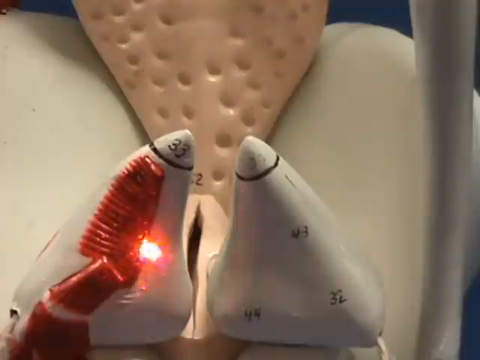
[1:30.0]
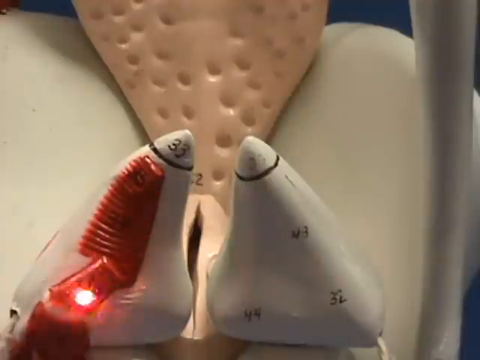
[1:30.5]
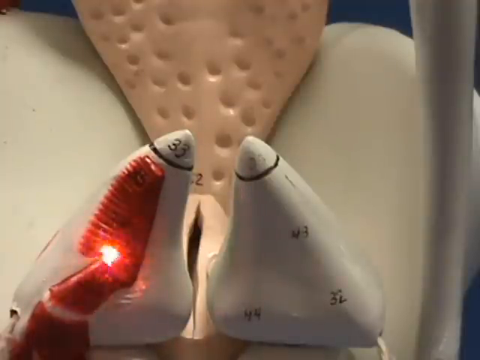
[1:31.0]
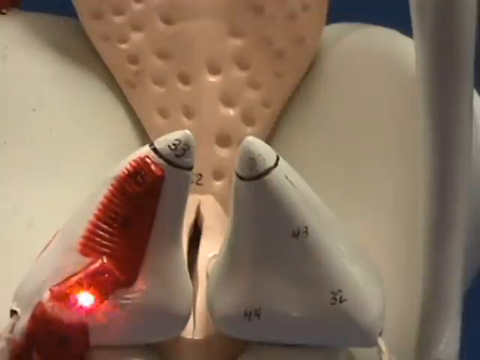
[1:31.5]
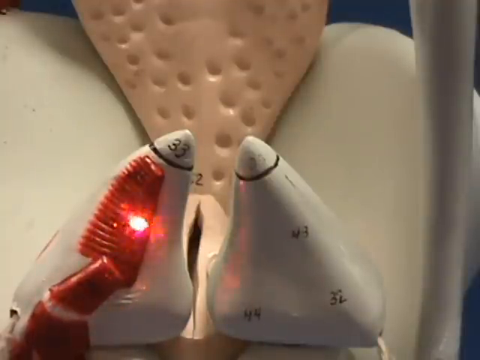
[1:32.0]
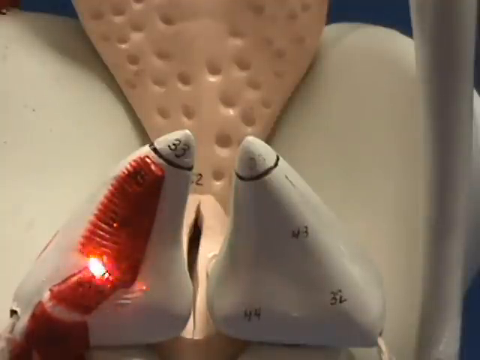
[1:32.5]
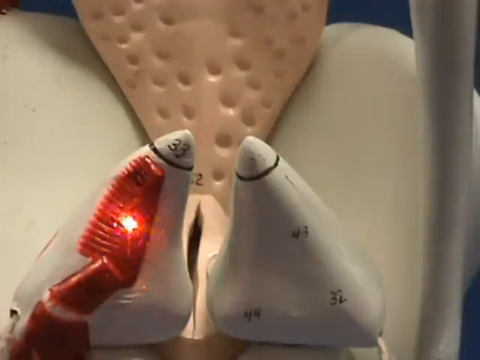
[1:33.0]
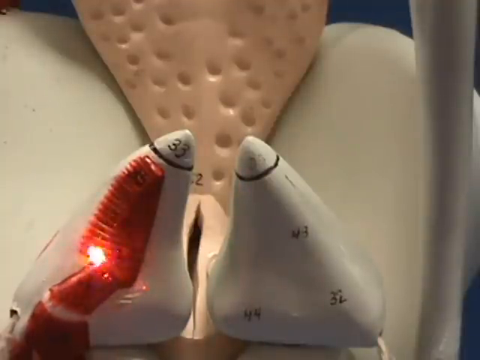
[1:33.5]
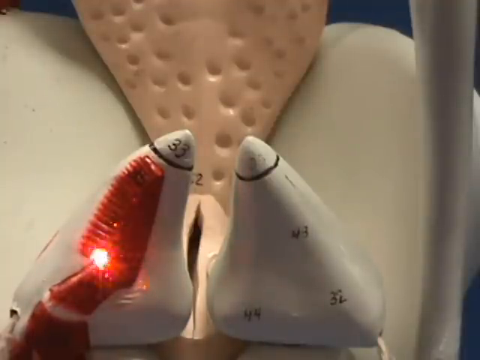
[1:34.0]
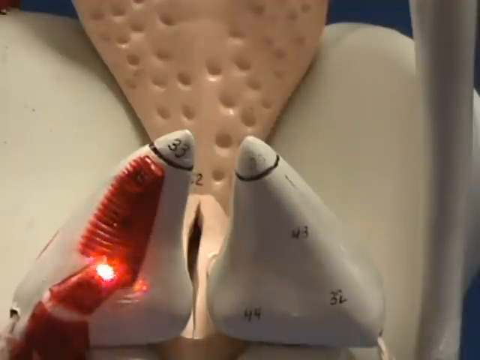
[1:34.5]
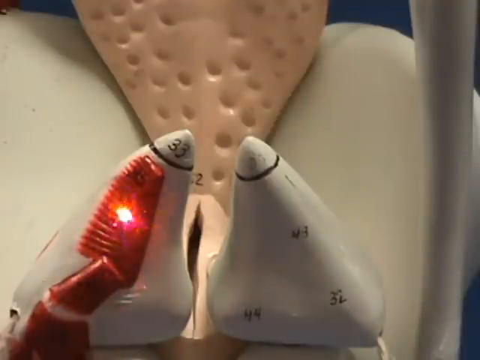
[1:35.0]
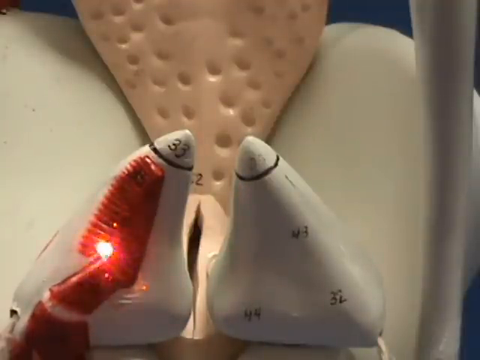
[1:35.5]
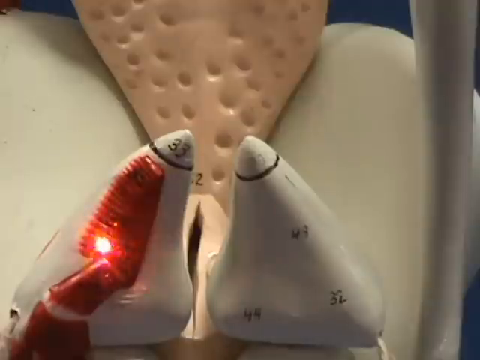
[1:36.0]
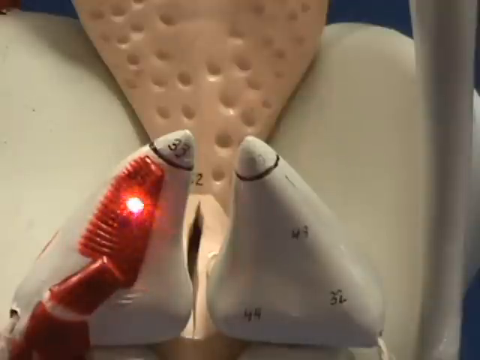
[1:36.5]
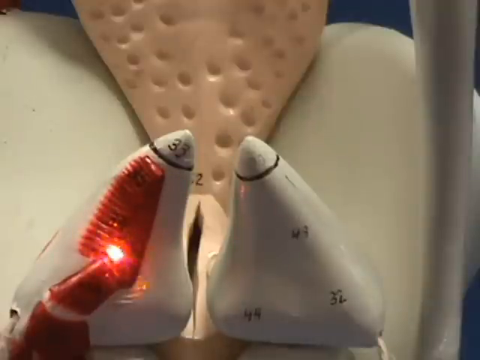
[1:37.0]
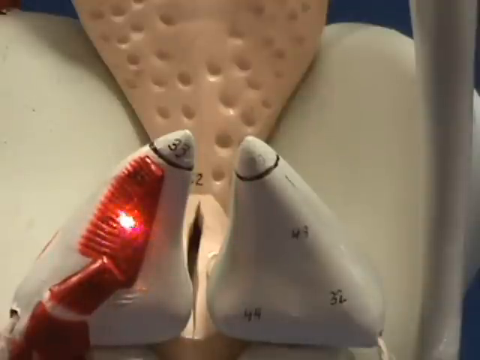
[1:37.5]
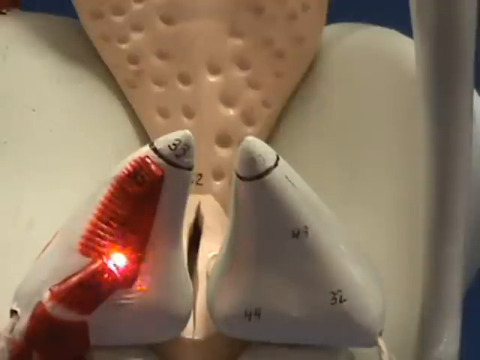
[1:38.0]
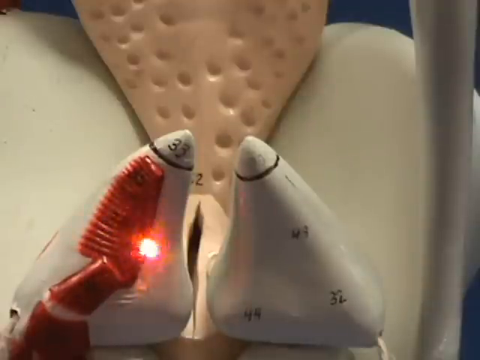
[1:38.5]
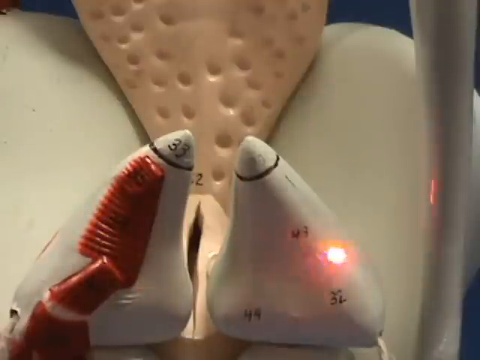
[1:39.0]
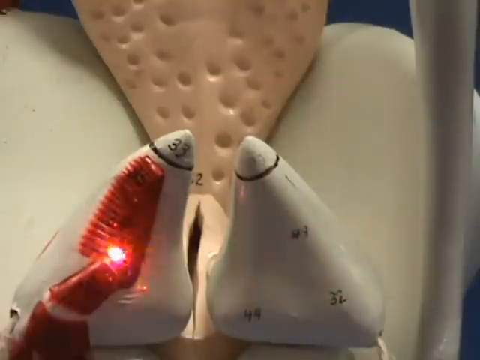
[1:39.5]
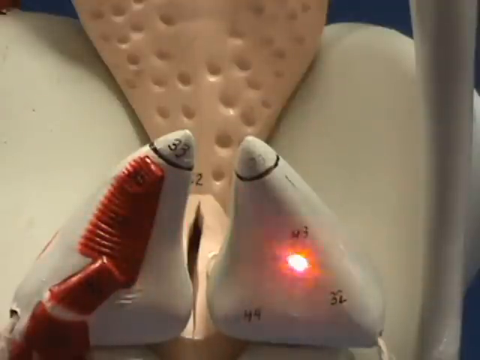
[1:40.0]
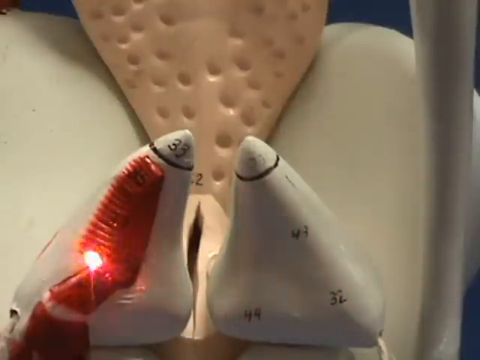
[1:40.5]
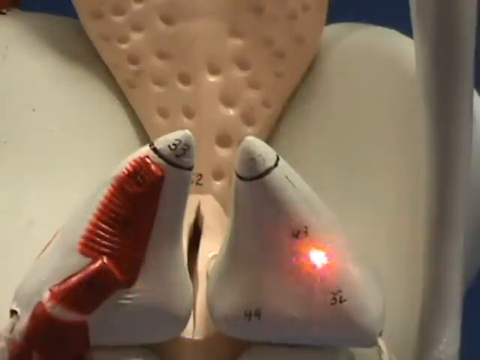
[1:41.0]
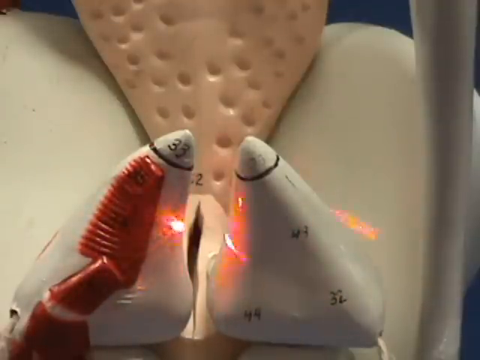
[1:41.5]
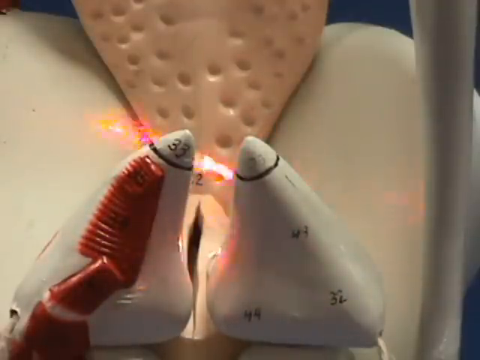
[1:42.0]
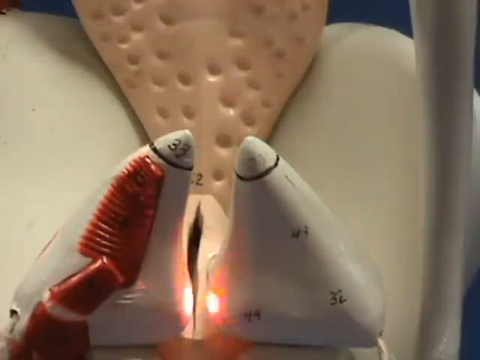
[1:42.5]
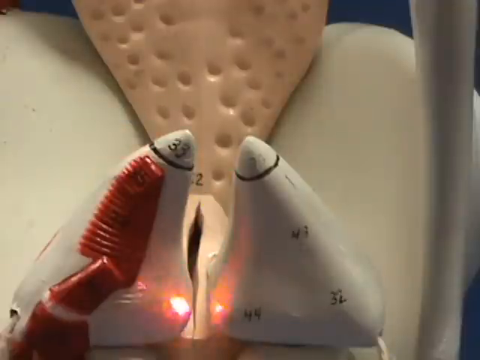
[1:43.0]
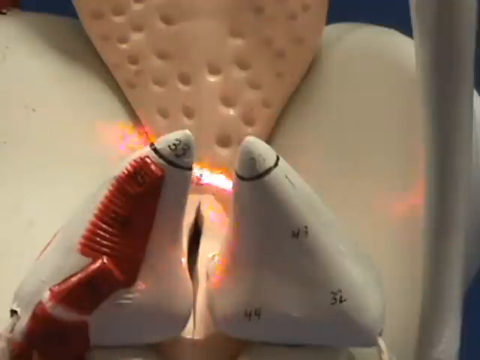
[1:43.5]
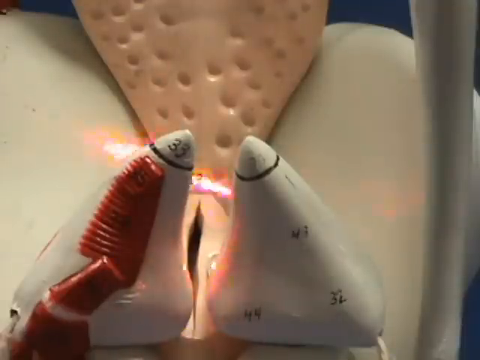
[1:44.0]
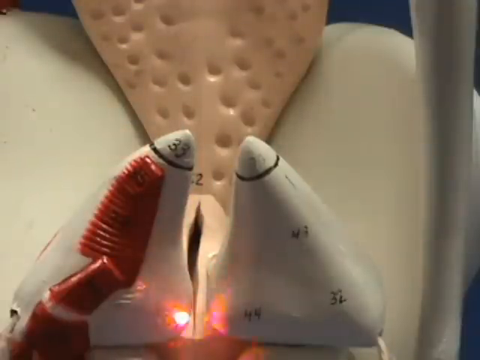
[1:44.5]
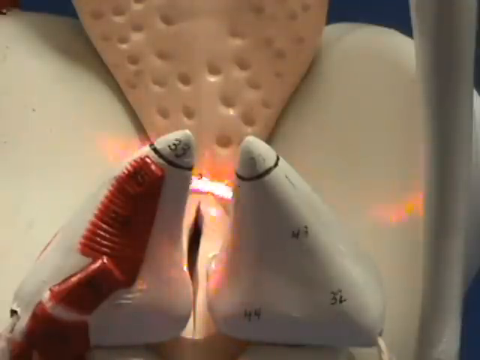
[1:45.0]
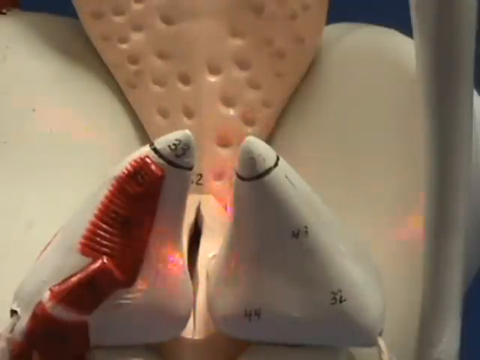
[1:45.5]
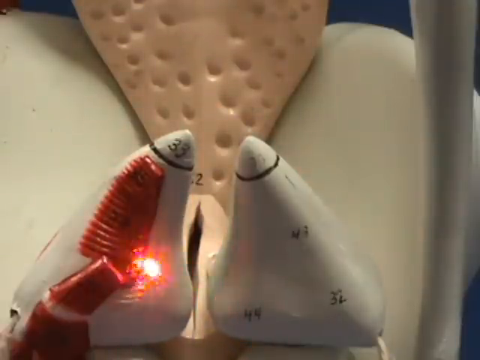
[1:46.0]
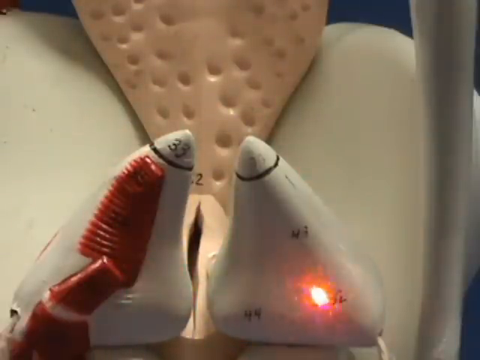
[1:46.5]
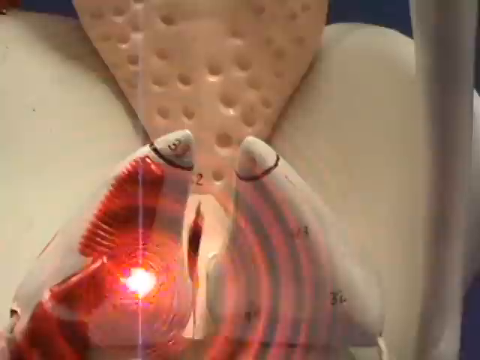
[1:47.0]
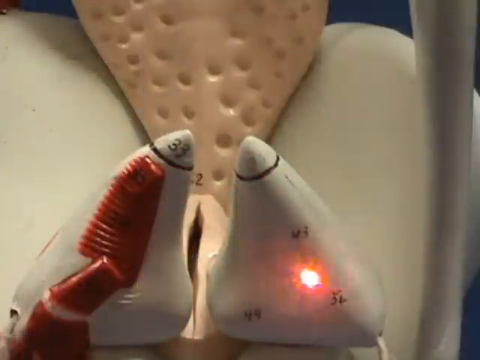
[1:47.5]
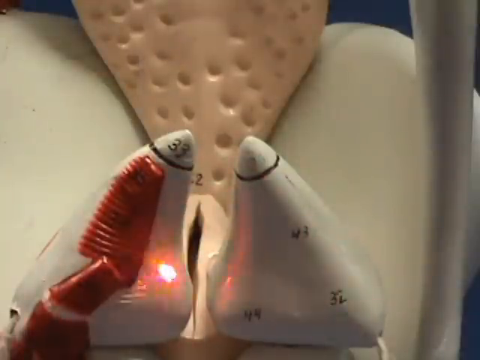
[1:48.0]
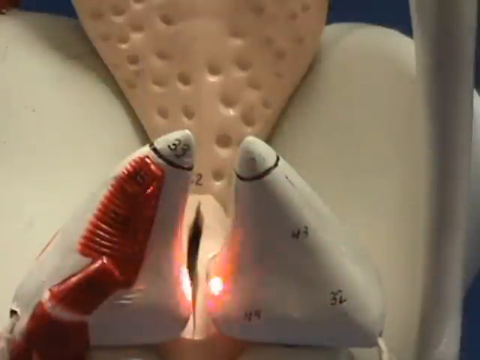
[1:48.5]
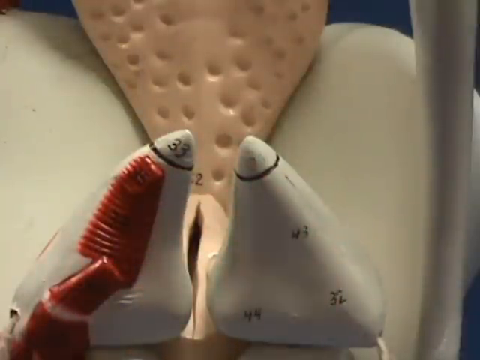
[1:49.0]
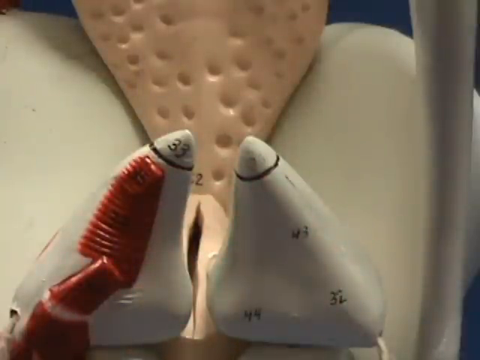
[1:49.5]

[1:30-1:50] An up-close view shows a model of a larynx with connected pieces that look like bone, a piece that looks like a tongue, and at the bottom of that two pointy, tooth-like bones, one on the left and one on the right. The left one is white and pointy with a red stripe down its outside; the right one is just white. A person standing off frame with a laser pointer points to different areas of the model, and a little red dot shows where he is pointing. He points the dot at the pointy, tooth-like piece with the red stripe, highlighting the stripe, and keeps going over that red stripe.